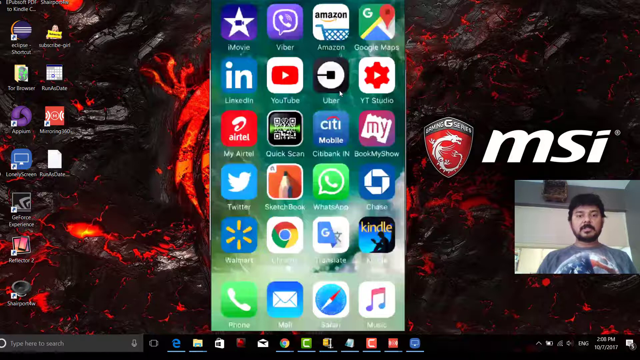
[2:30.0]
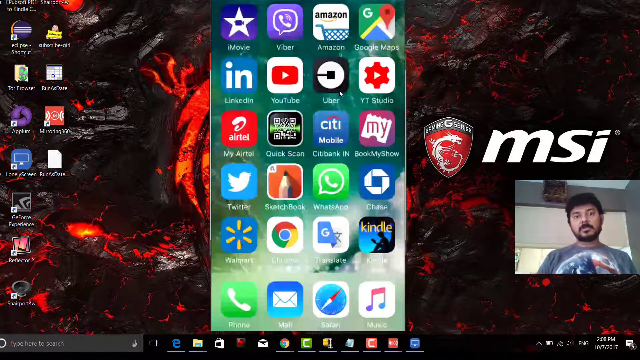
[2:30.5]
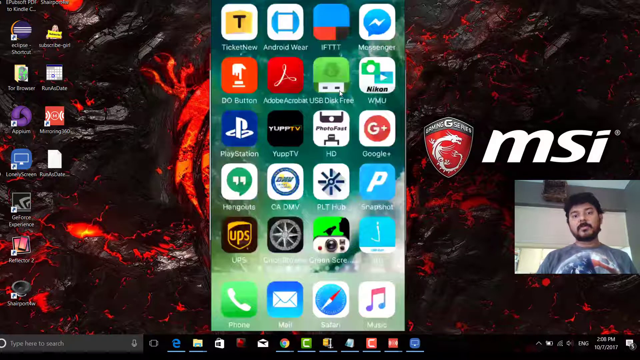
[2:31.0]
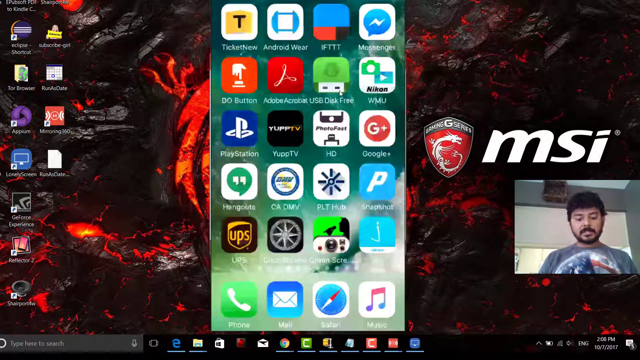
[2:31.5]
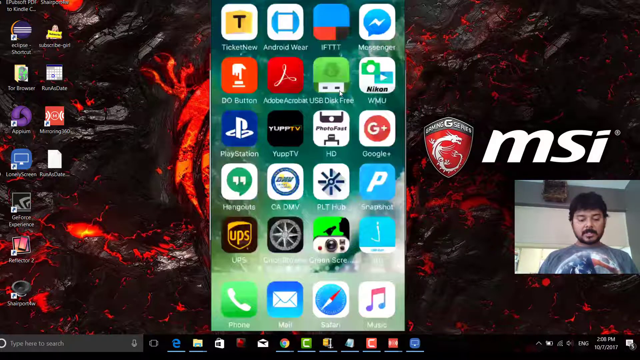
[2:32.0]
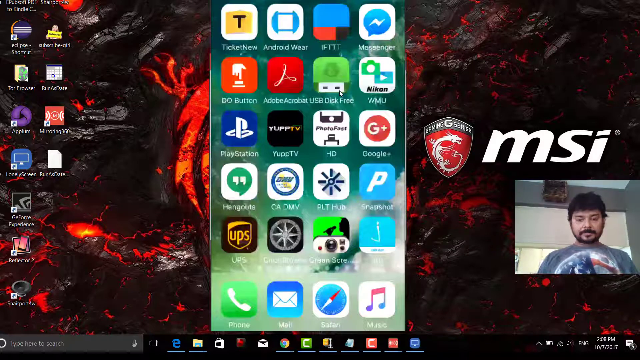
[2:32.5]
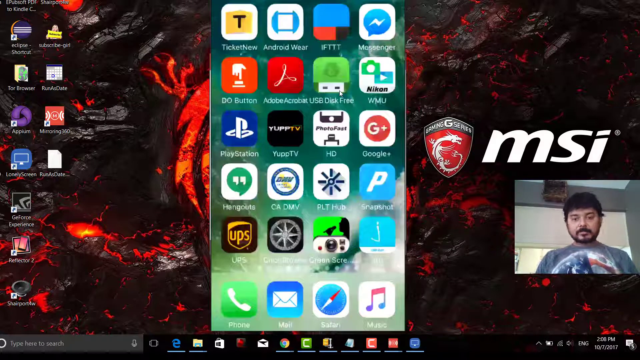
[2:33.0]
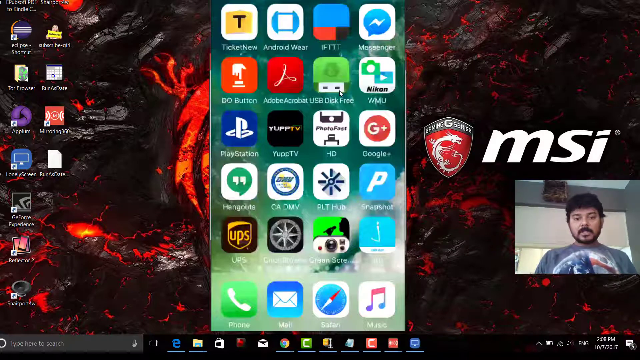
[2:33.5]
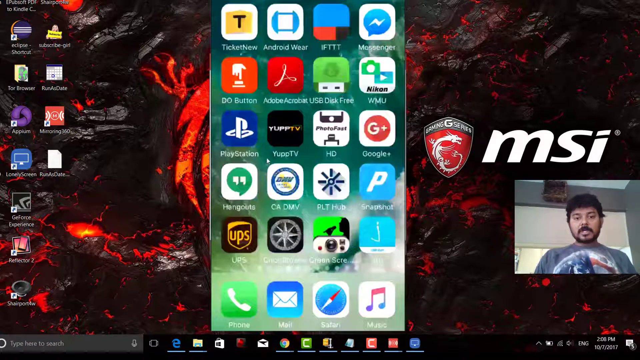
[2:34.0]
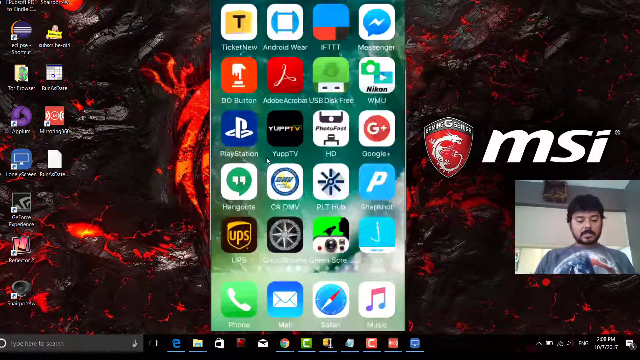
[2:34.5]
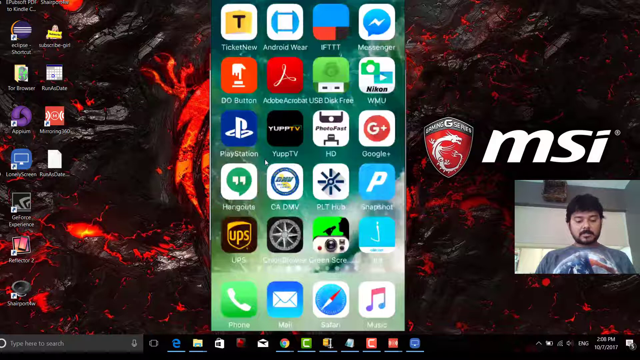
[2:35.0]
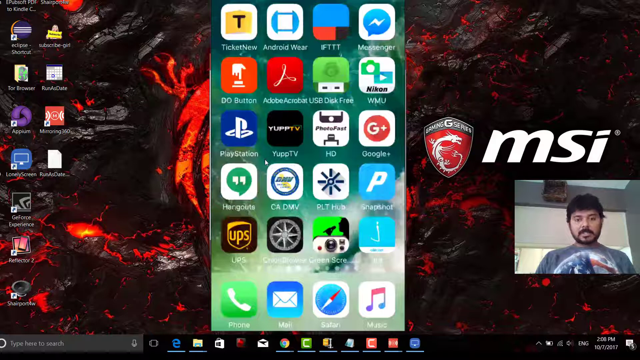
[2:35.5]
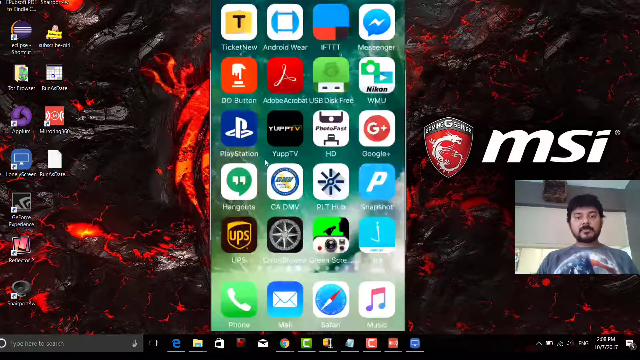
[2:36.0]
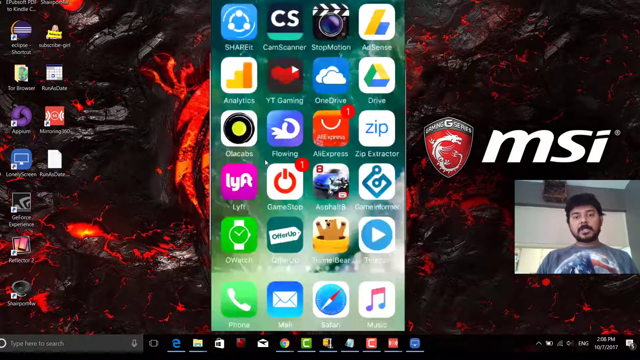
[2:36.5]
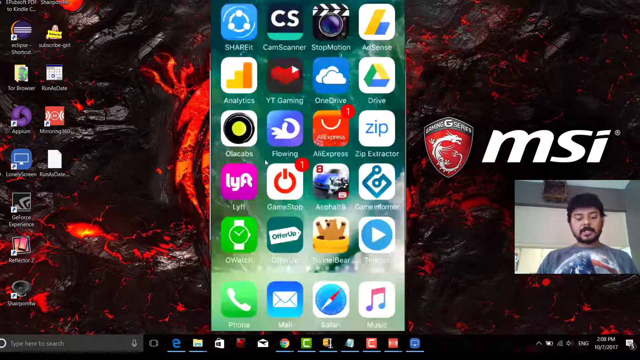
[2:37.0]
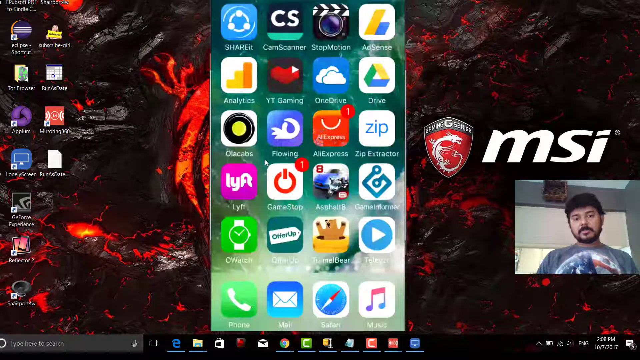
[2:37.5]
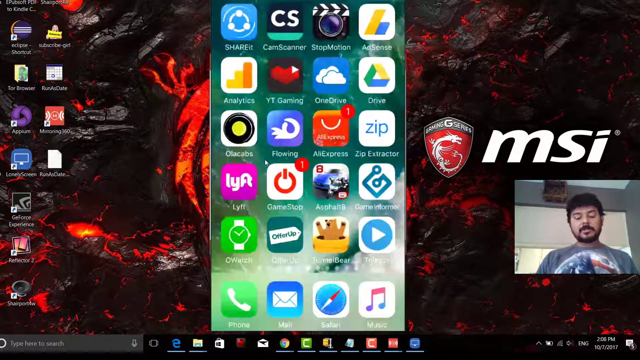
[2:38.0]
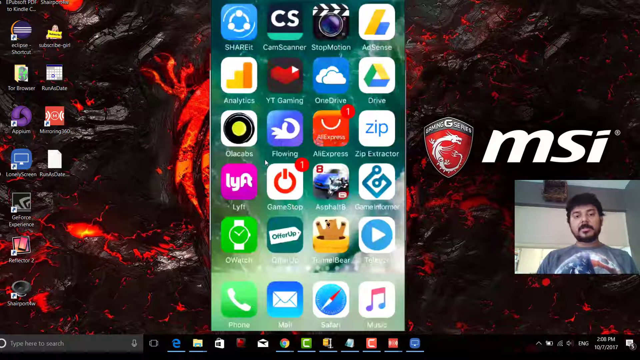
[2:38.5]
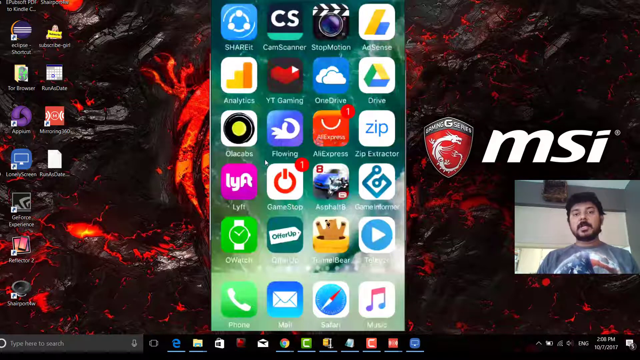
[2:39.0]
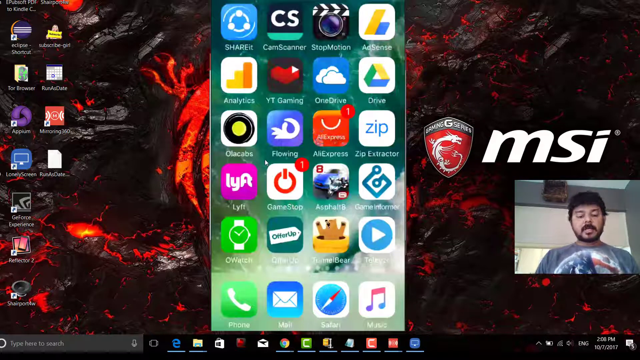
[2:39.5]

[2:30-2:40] A man vlogs in the lower right corner of the computer screen while showing the screen of his phone, going page by page through several apps as he continues talking. The apps include Kindle, Google Chrome, Safari, the phone app, email, and a music app.